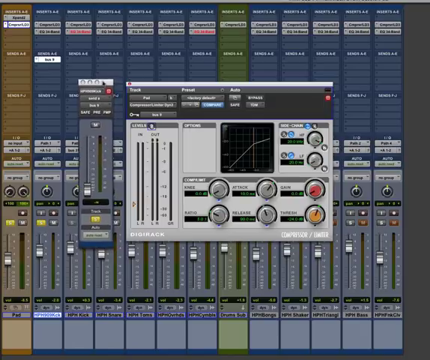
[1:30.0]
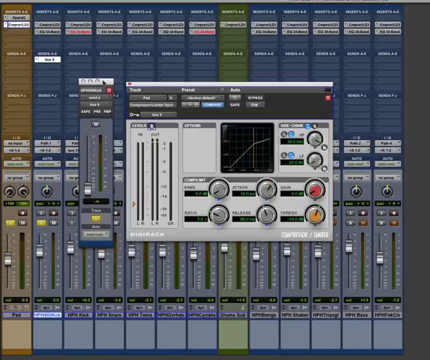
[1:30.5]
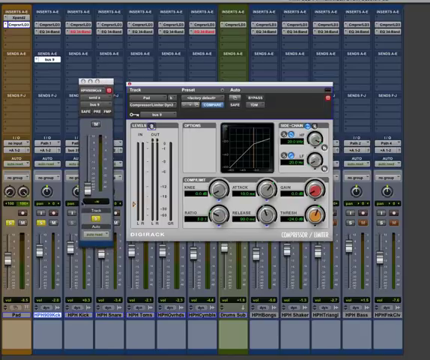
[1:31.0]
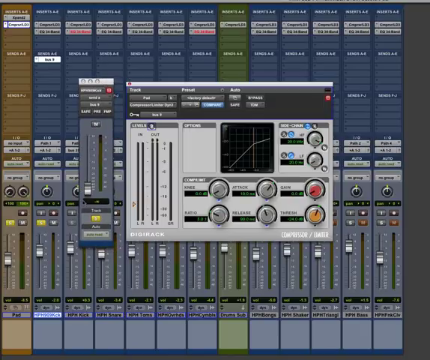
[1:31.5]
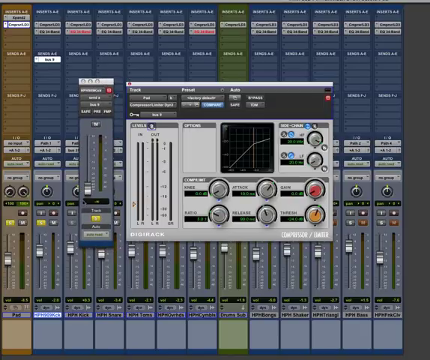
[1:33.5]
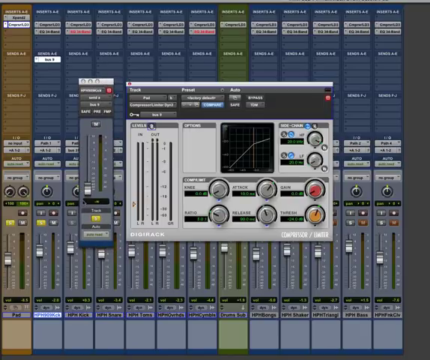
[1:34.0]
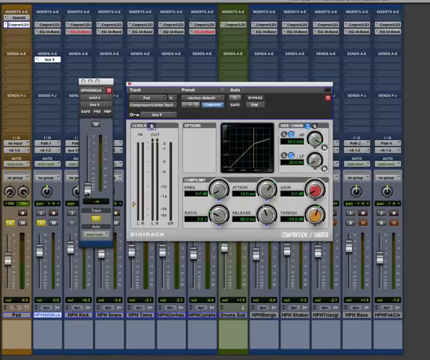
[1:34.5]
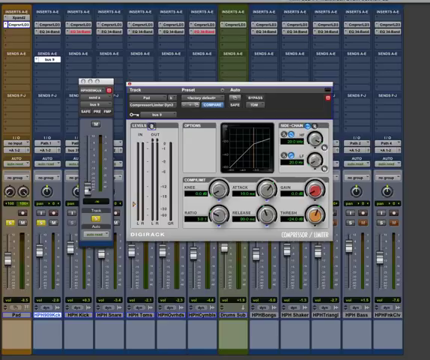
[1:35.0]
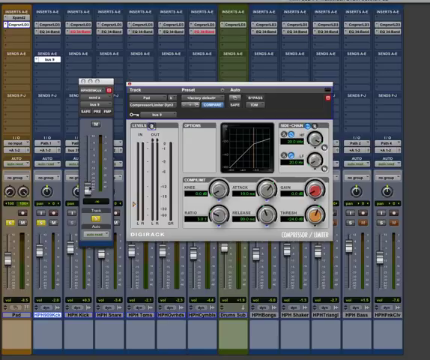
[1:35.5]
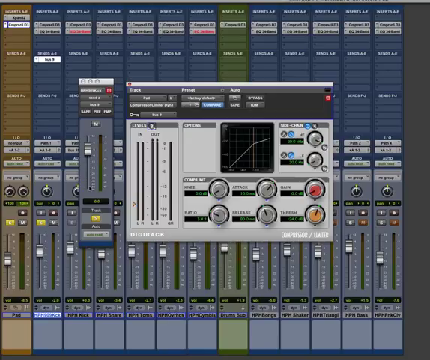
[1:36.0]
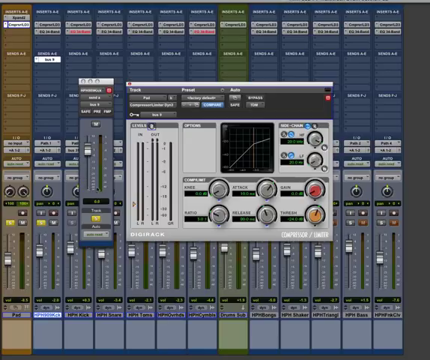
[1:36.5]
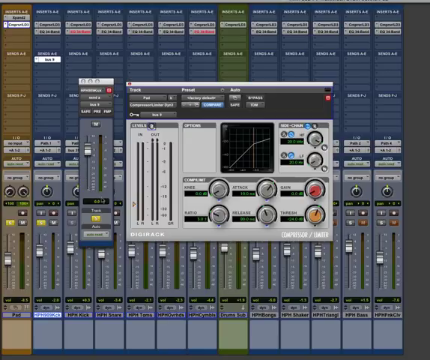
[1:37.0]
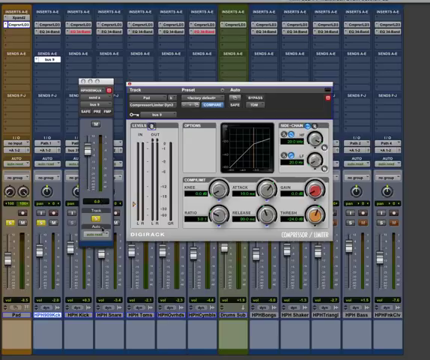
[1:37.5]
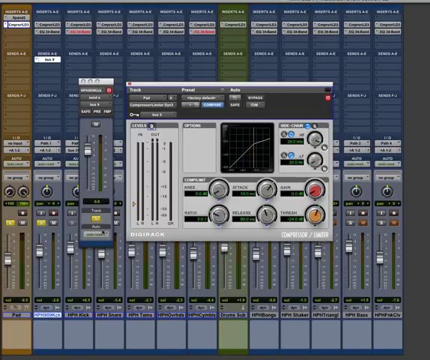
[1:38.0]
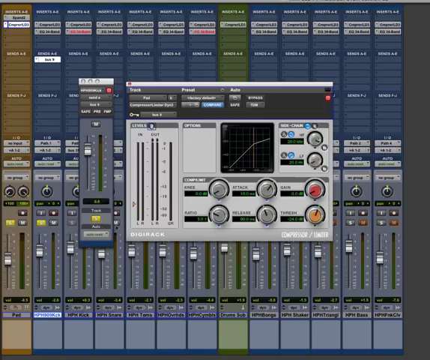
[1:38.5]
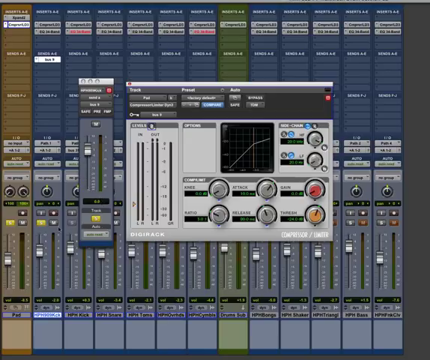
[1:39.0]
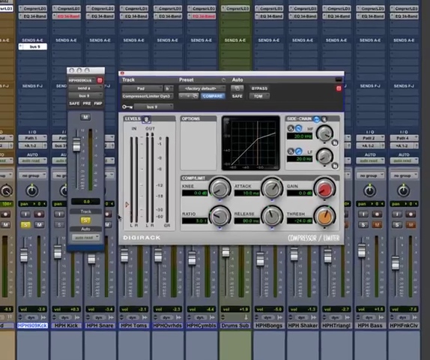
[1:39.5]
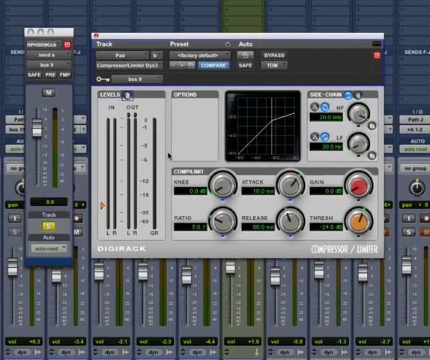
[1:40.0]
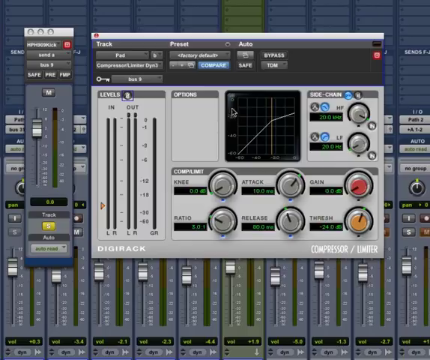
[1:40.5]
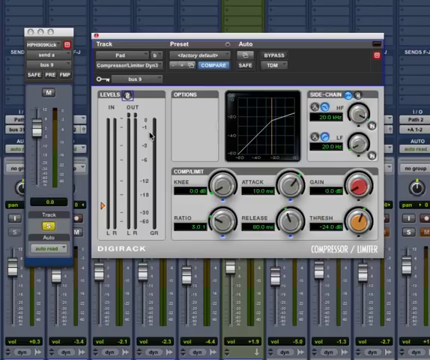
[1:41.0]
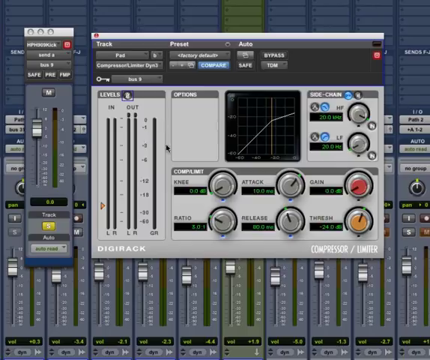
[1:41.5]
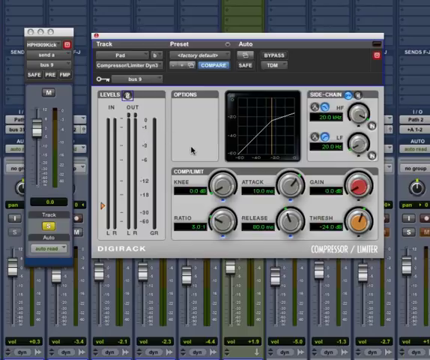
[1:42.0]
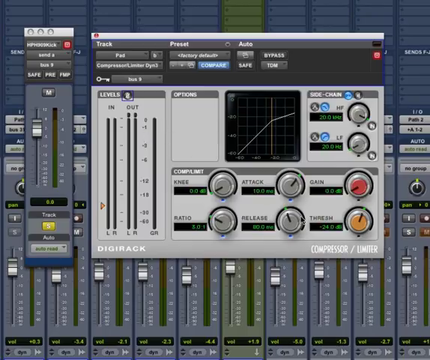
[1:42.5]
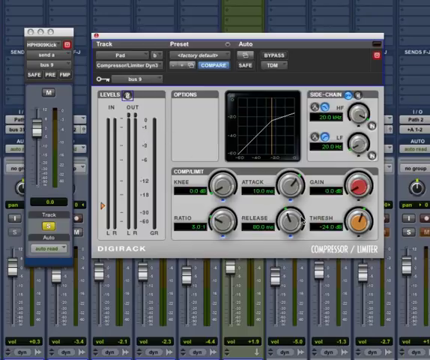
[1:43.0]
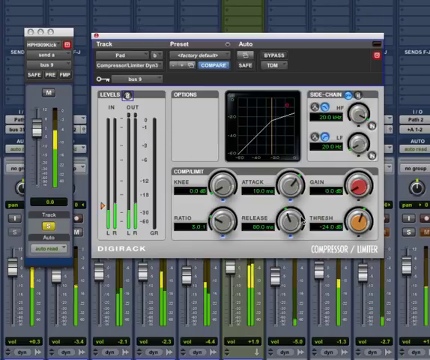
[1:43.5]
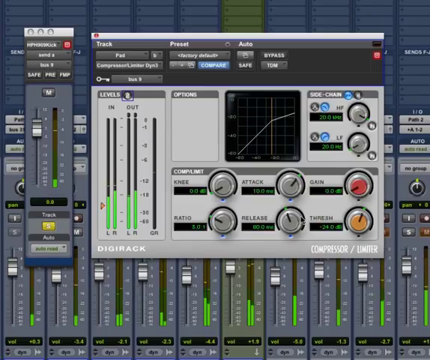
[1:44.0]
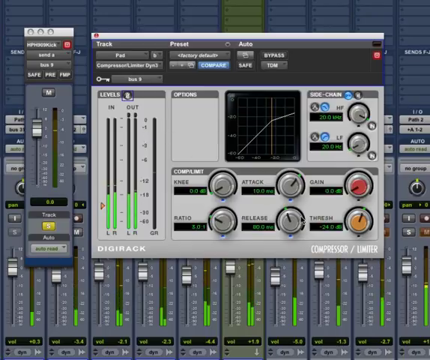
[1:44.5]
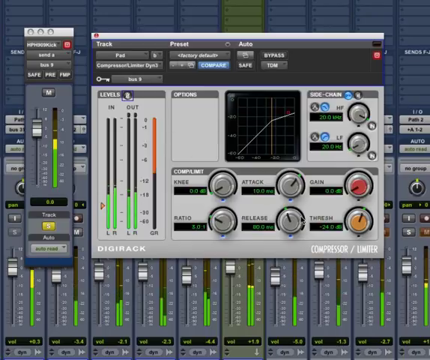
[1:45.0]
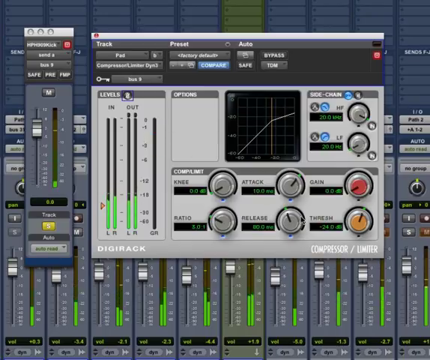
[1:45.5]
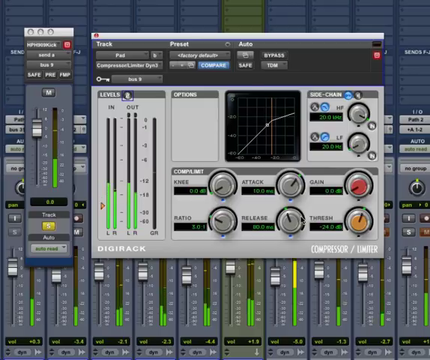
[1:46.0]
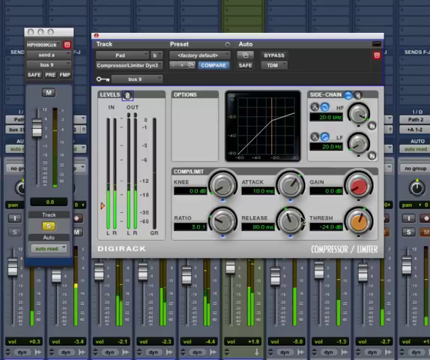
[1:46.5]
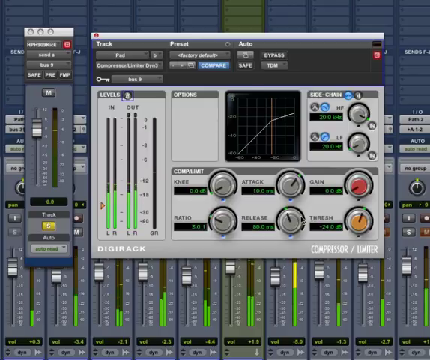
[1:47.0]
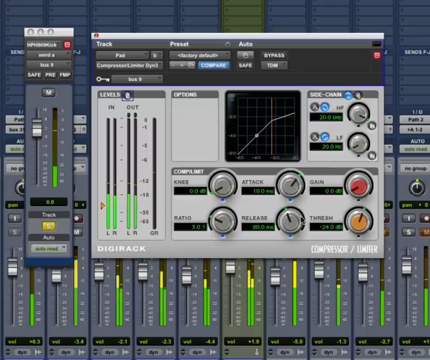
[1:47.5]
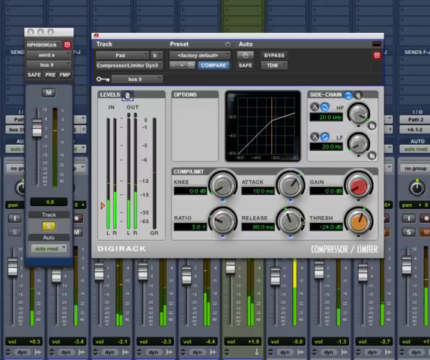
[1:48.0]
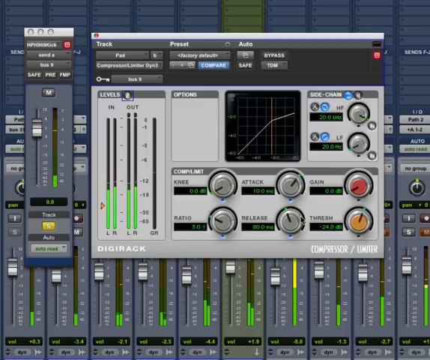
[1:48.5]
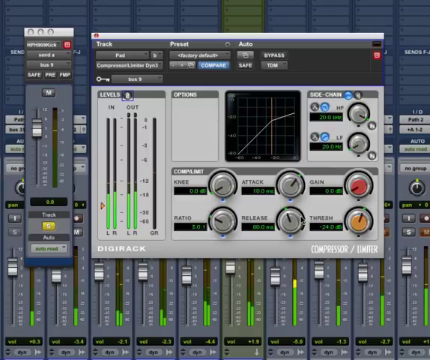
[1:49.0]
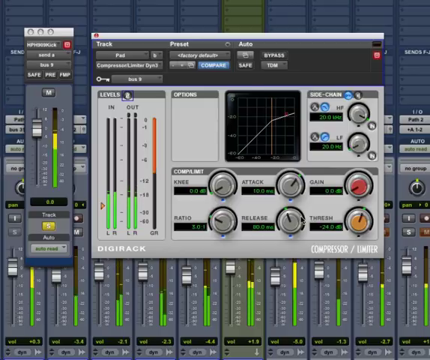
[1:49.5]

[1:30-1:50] Under the side chain compression in Pro Tools title are the 15 slots in brown, light blue, and green, representing different volumes. He clicks with his mouse on a blue button, and a yellow box with black font comes up. The fluorescent green starts to fluctuate and beat, as if detecting different levels of sound: fluorescent green at the bottom, fluorescent yellow in the middle, followed by a little red. Text up top reads "Insert A and E," "Compressor," "EQ," and "3-4 Band" twice; in green it reads "Insert A, E, Compressor, LD-3," and in blue "Compressor, LD-3, EQ, 3-4 Band." A bunch of lines separate the different compartments; some are red, some black, and some white.